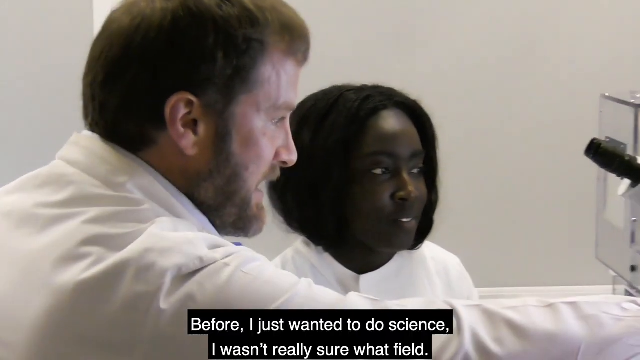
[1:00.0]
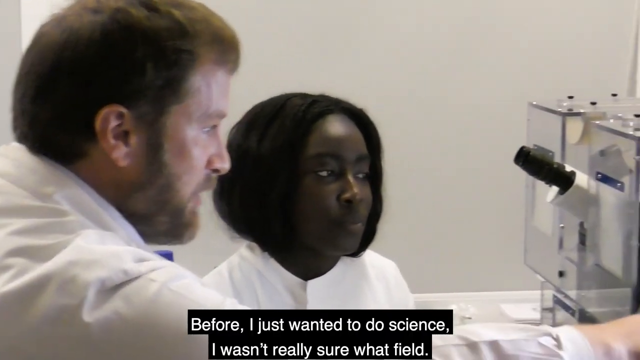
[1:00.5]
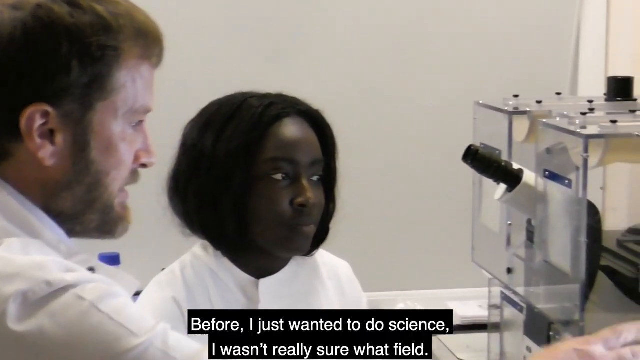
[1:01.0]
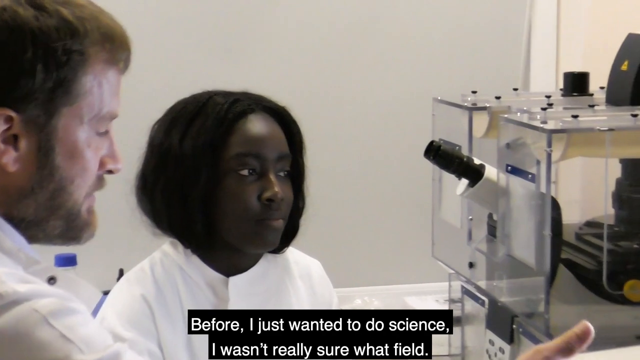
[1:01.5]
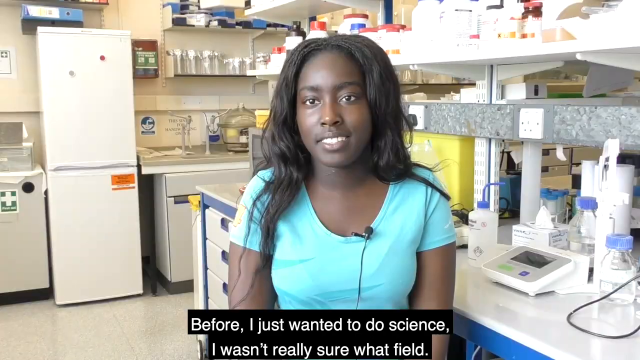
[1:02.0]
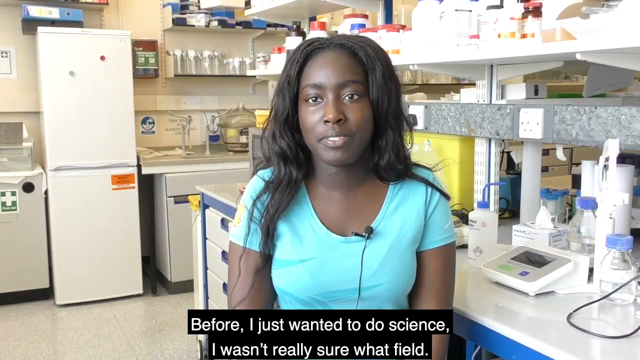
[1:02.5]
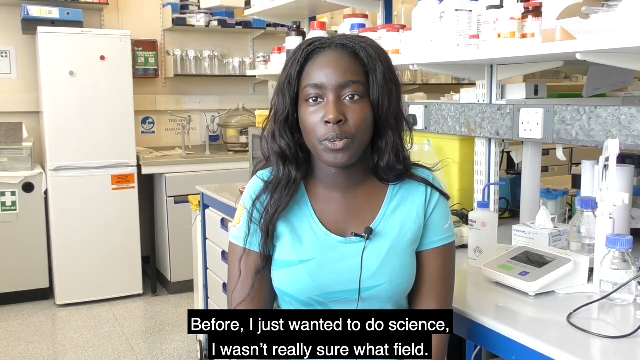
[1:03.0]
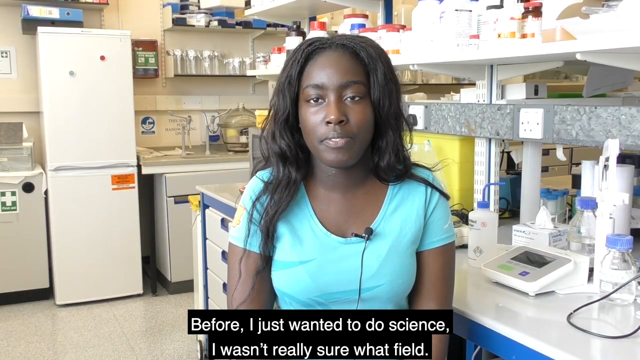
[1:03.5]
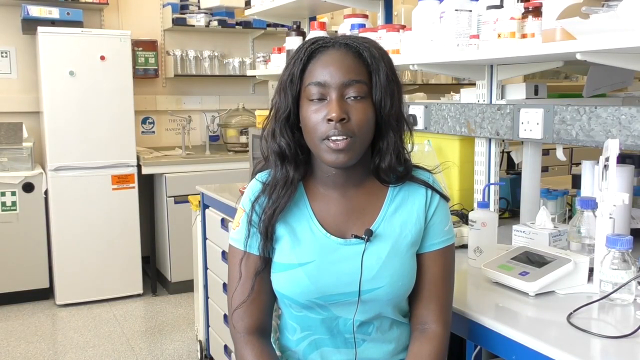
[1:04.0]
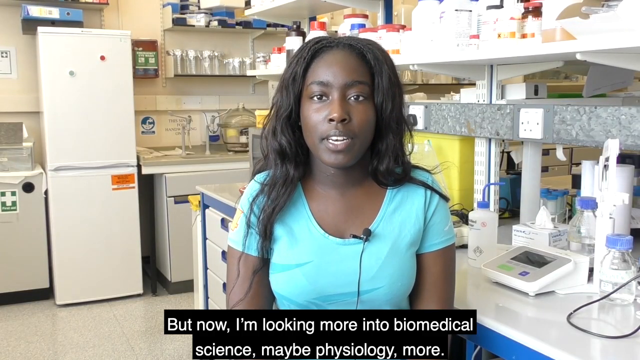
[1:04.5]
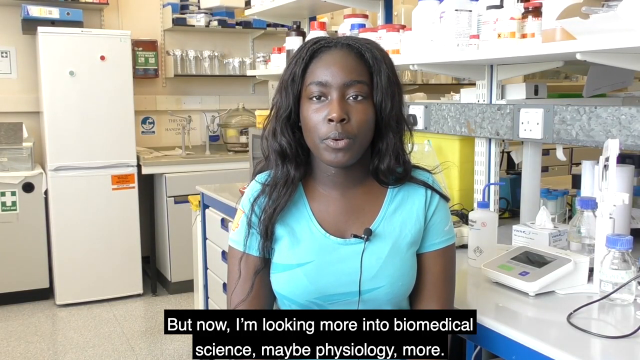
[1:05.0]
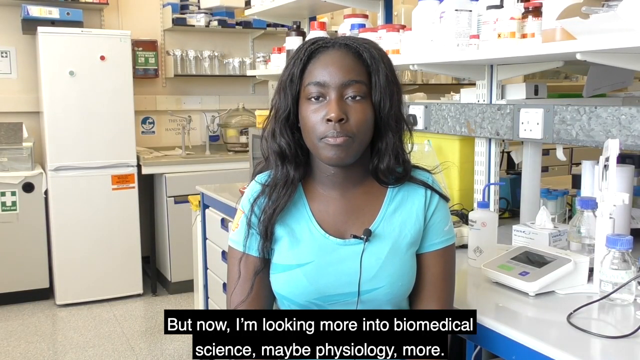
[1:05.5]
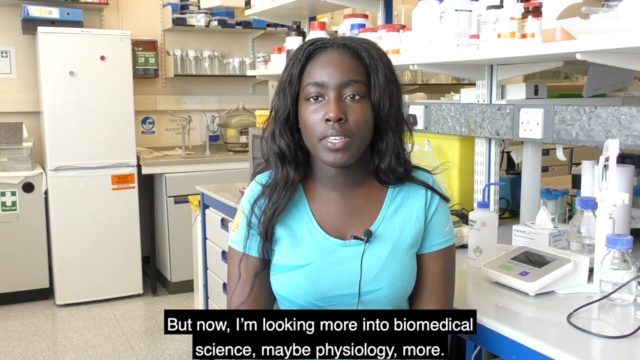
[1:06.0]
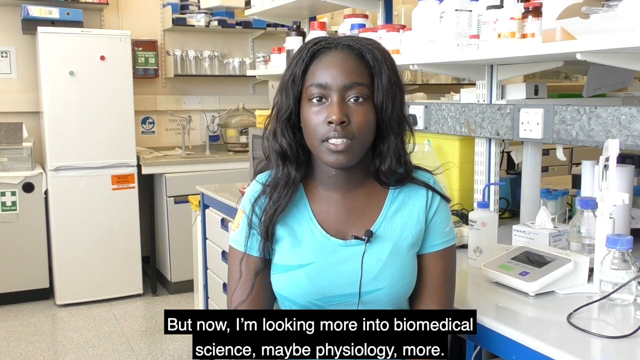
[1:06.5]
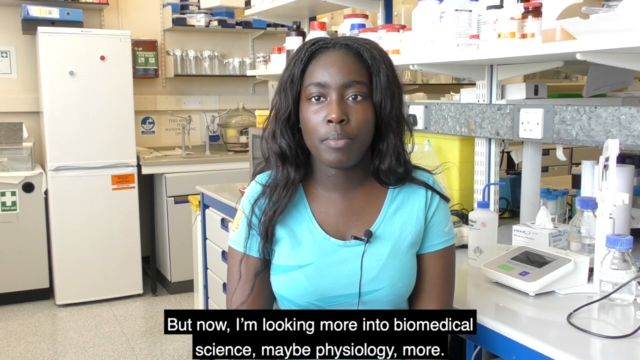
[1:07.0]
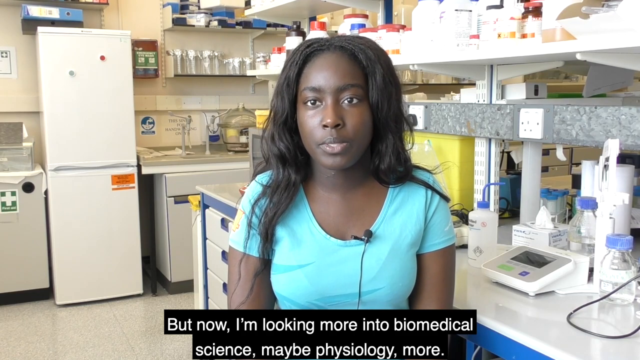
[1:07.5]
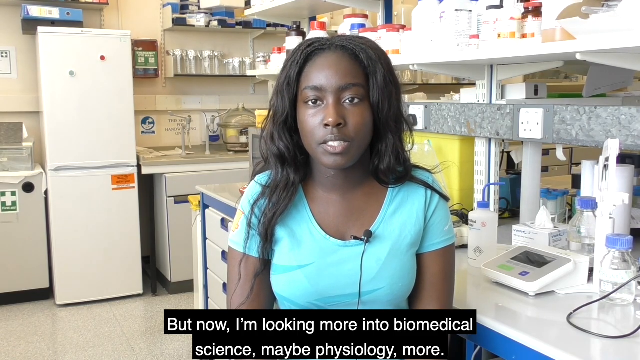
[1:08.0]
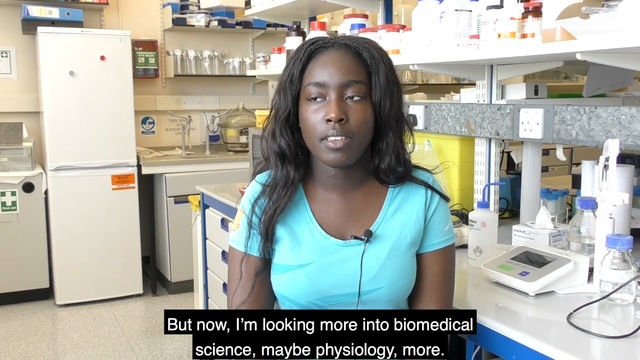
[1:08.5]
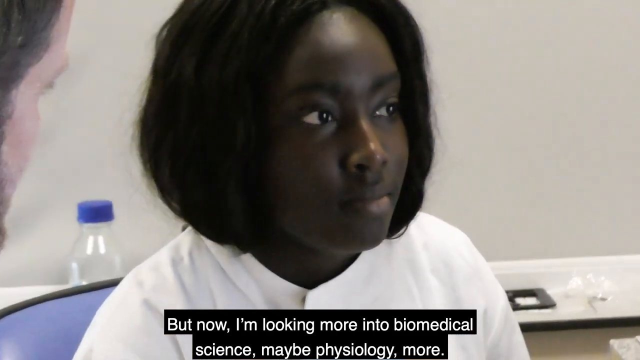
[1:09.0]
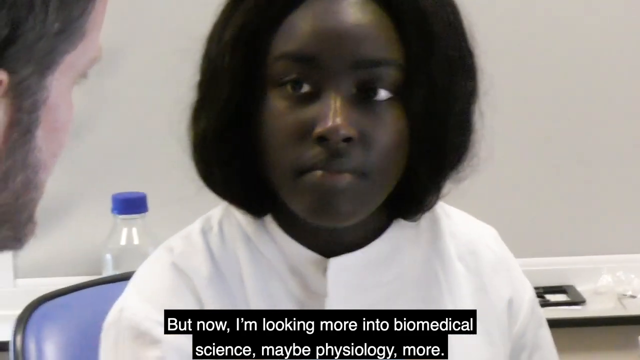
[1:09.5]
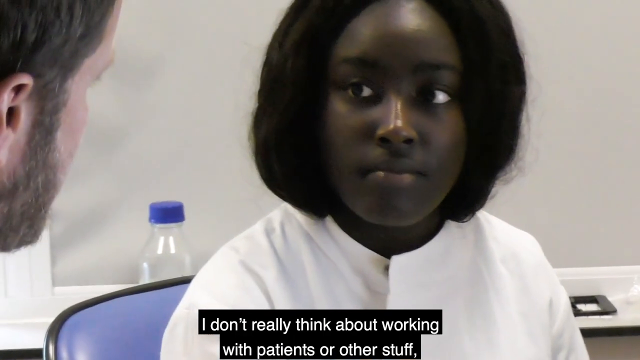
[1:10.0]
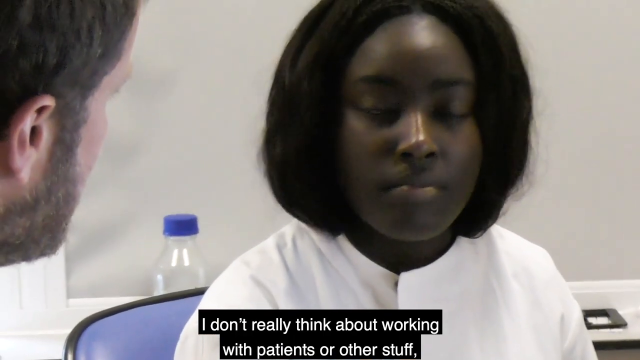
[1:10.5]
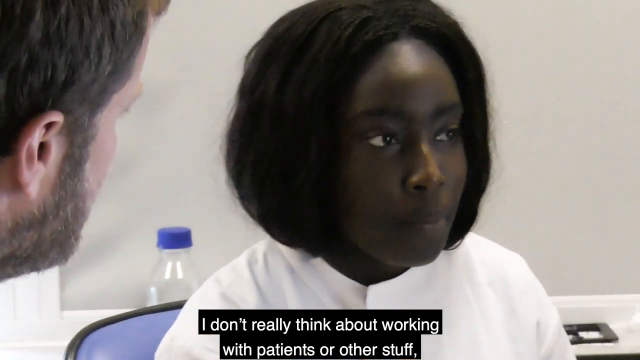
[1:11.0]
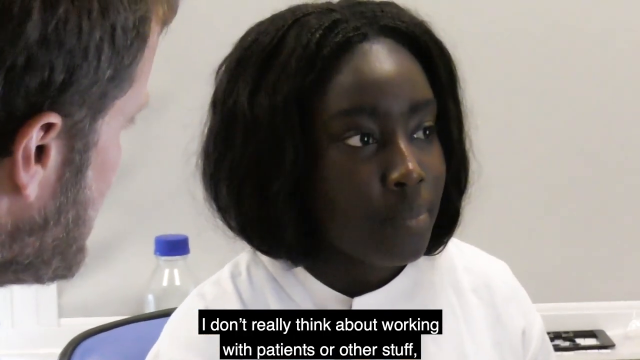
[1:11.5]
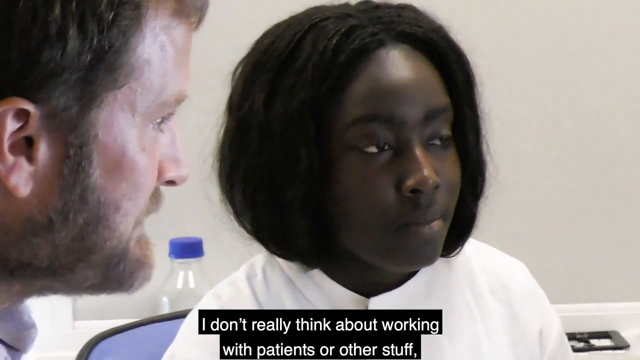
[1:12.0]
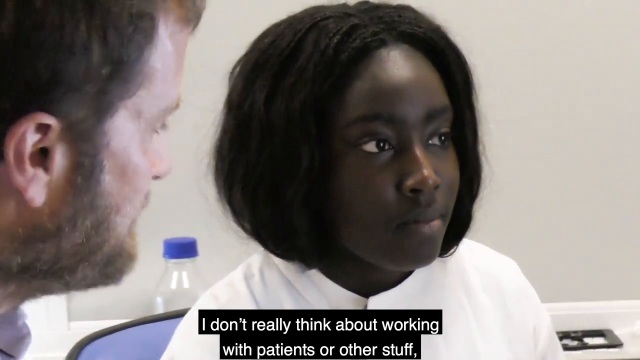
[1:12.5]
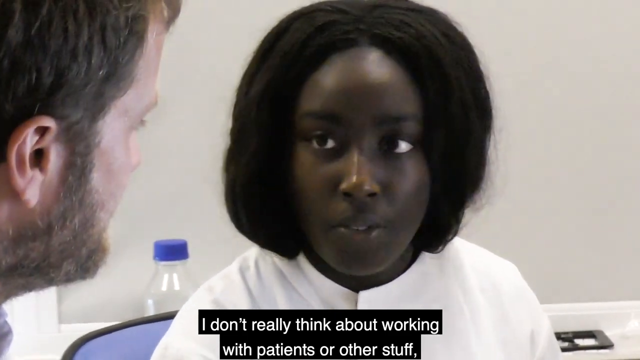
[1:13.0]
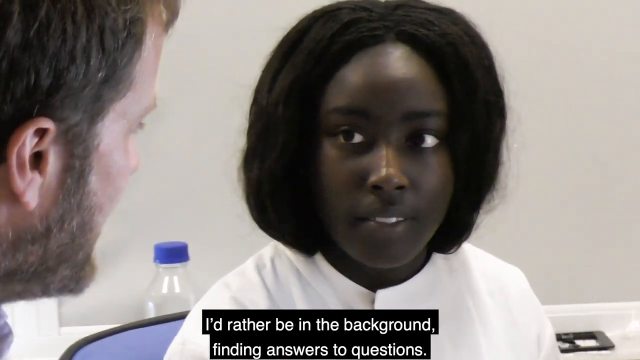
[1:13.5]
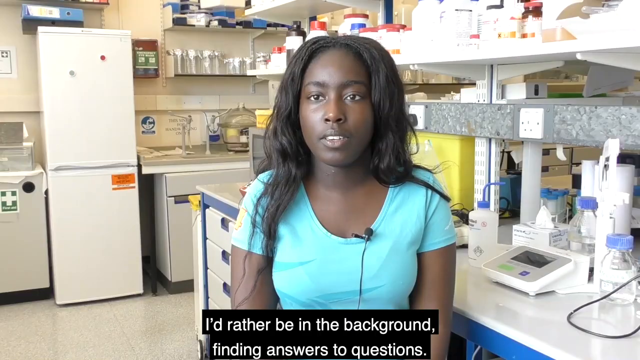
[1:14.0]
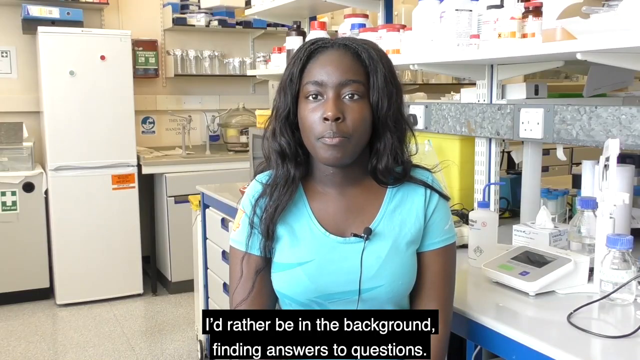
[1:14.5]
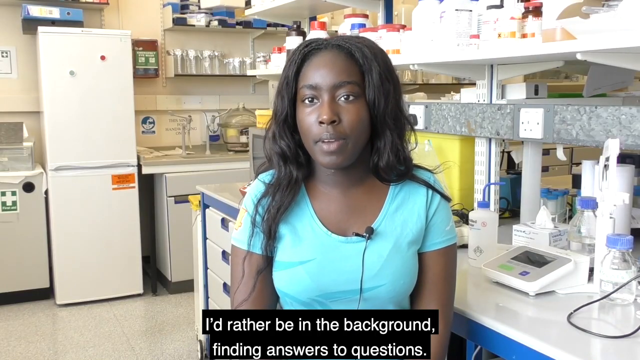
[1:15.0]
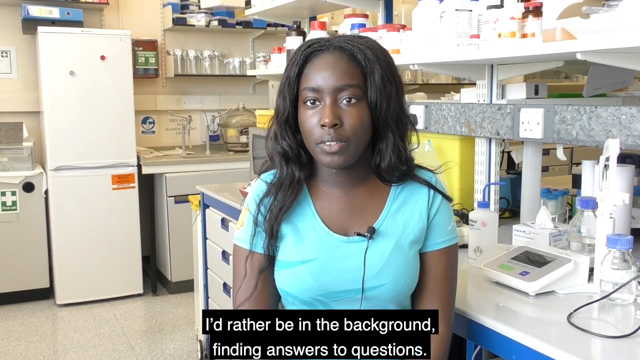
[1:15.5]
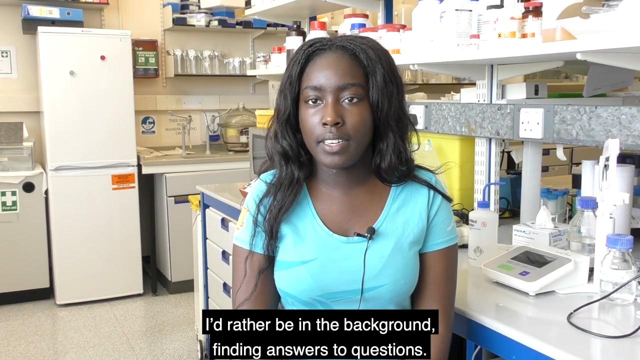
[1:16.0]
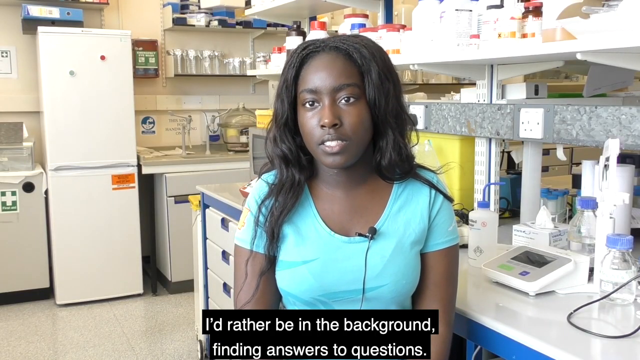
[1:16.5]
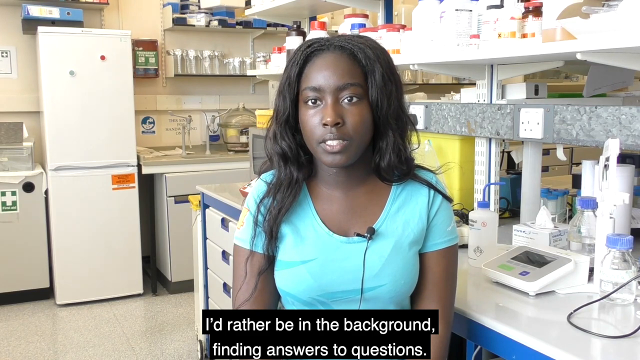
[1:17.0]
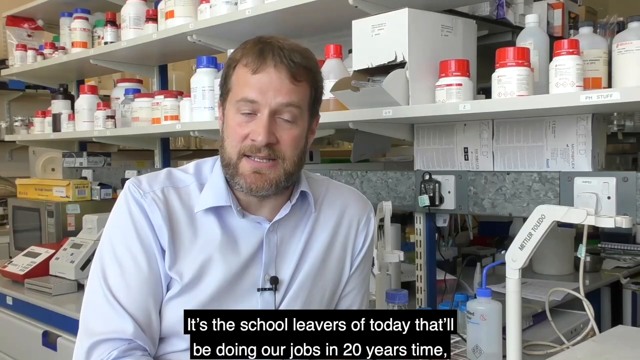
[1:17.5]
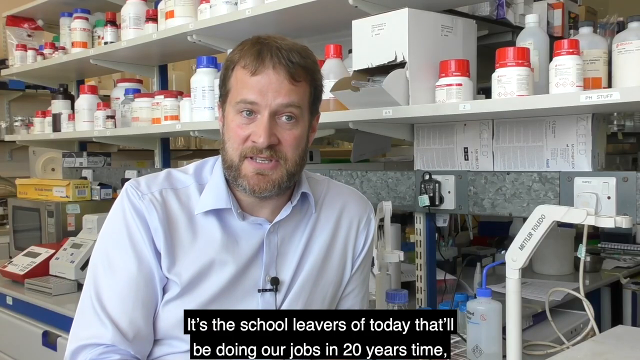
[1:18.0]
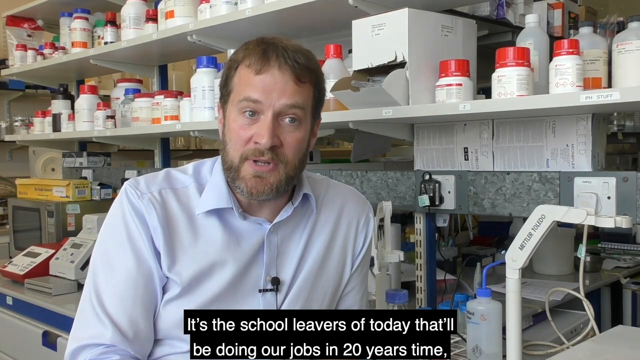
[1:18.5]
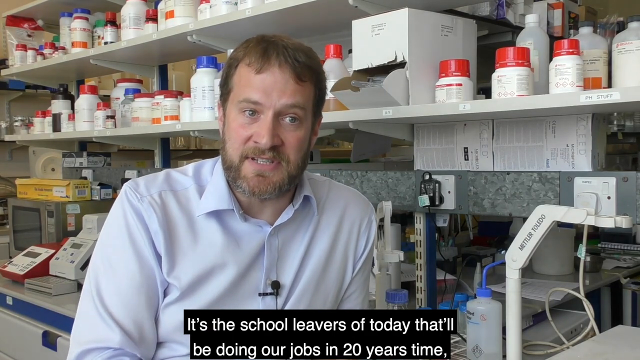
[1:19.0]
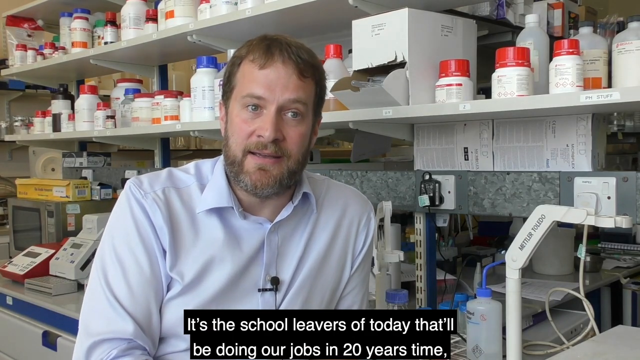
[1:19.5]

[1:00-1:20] James and the young woman sit at the computer, shown more zoomed in, with the focus on their faces rather than the computer screen. They are having a conversation, and she turns to speak with him. There are also shots of both her and James speaking directly to the camera.